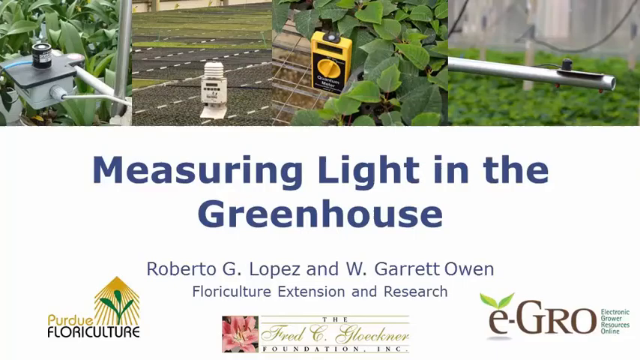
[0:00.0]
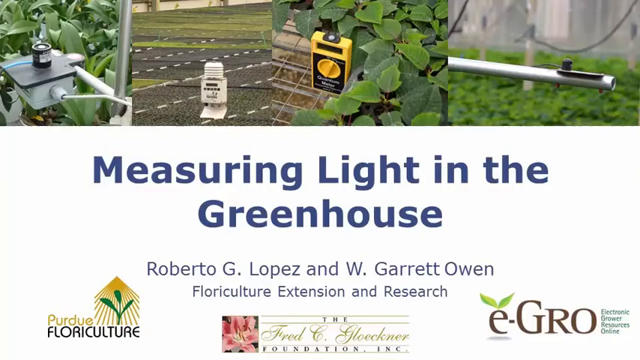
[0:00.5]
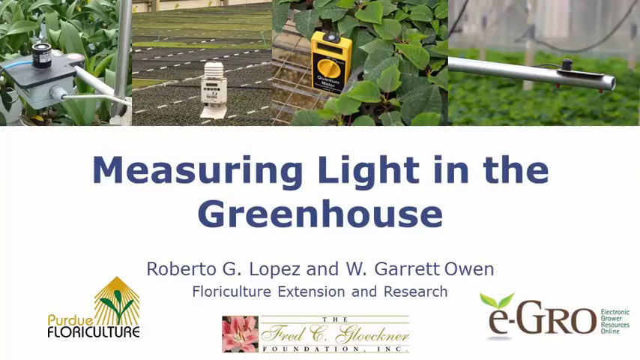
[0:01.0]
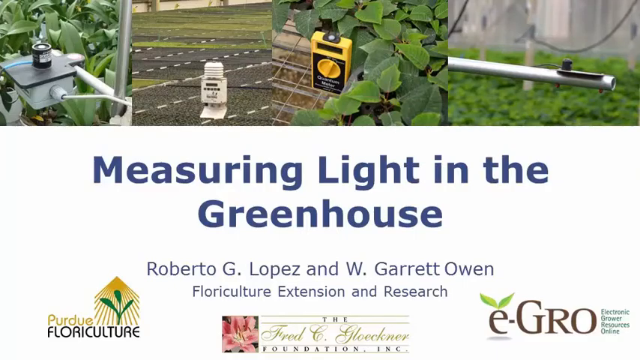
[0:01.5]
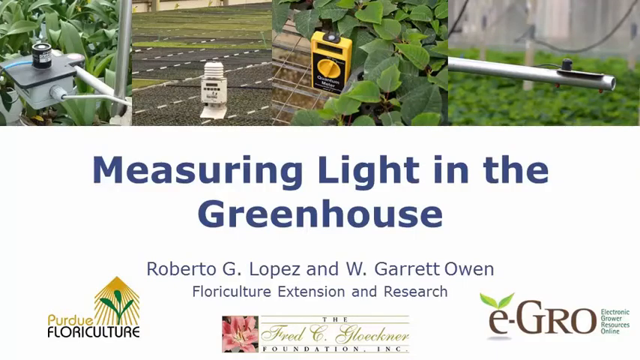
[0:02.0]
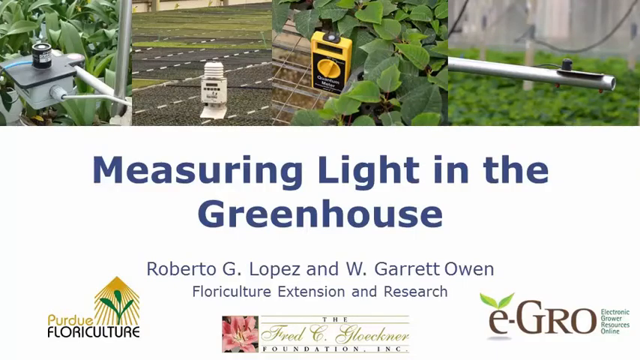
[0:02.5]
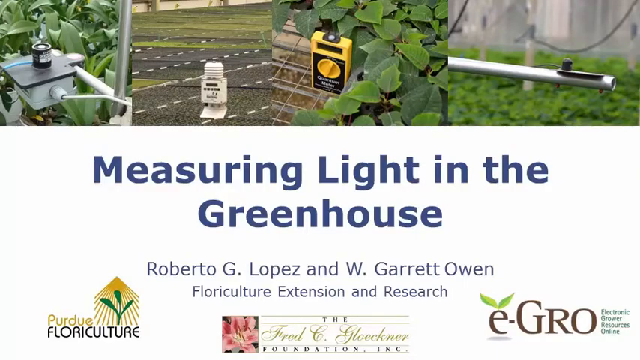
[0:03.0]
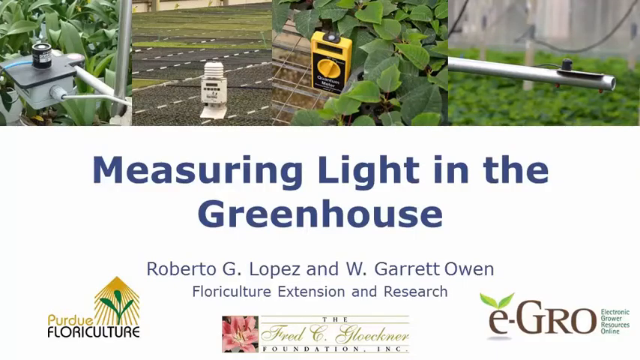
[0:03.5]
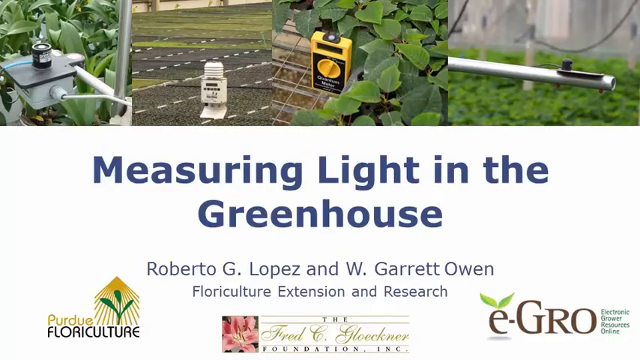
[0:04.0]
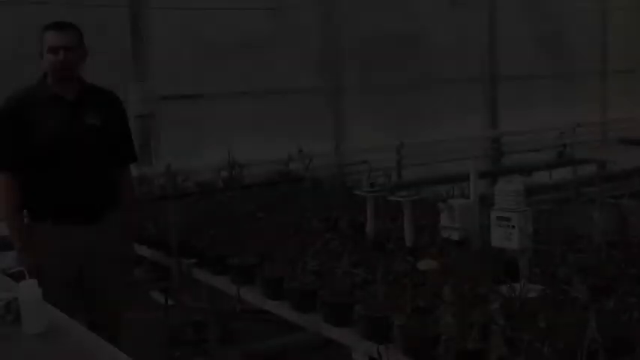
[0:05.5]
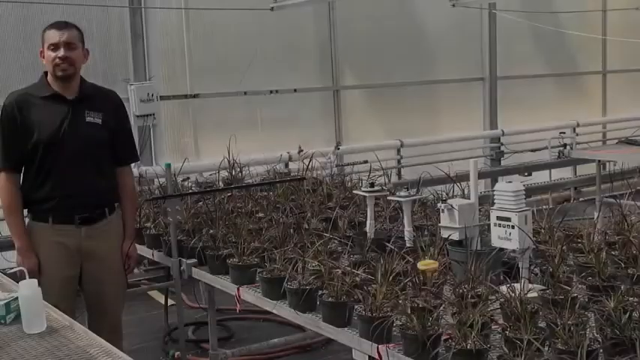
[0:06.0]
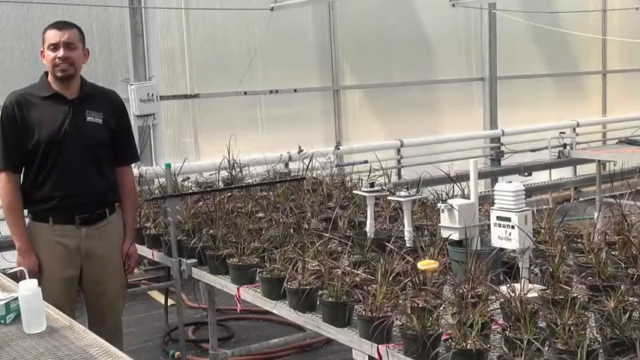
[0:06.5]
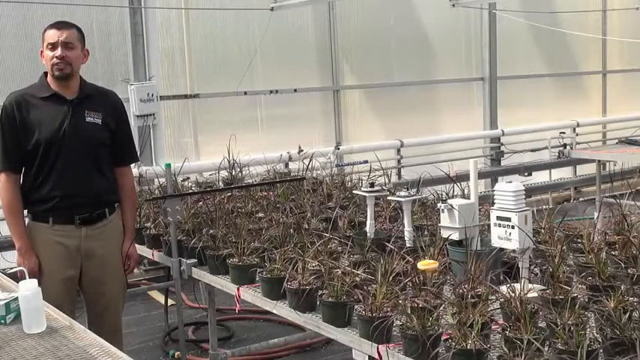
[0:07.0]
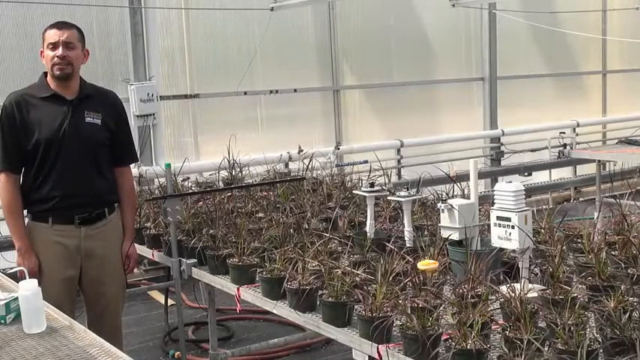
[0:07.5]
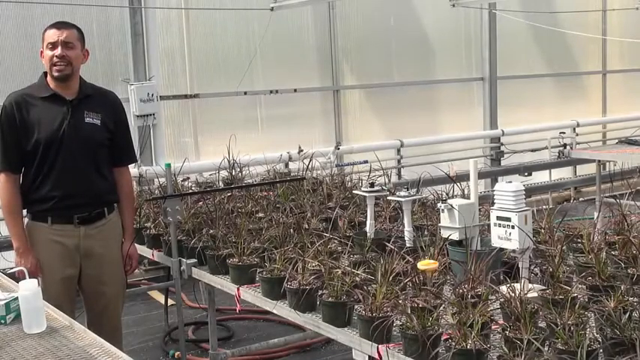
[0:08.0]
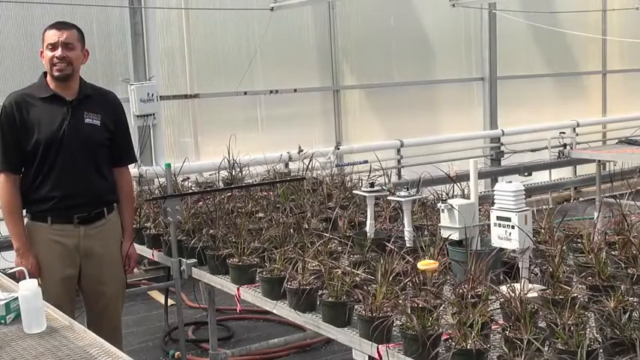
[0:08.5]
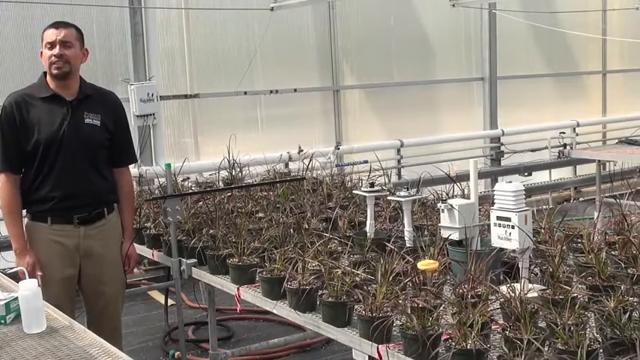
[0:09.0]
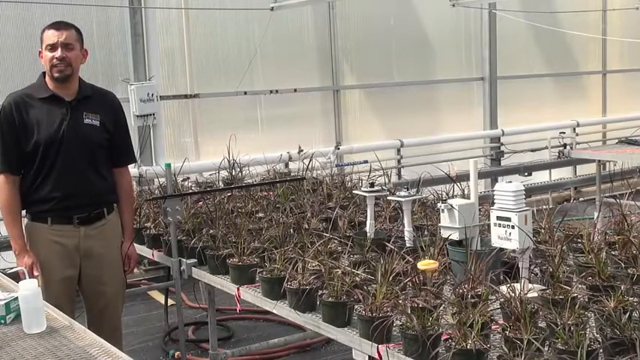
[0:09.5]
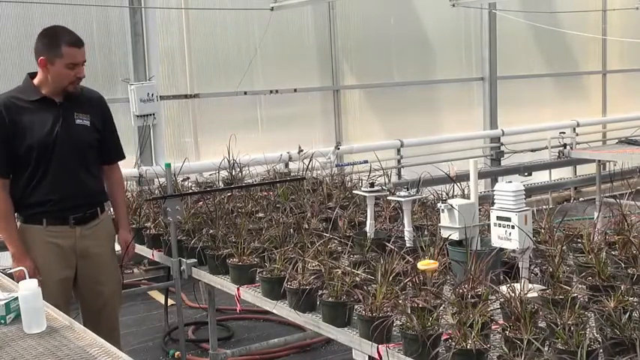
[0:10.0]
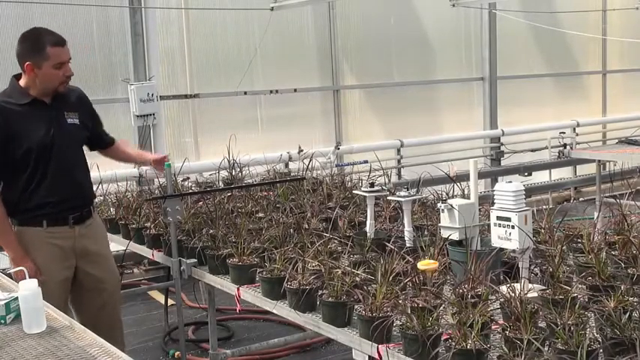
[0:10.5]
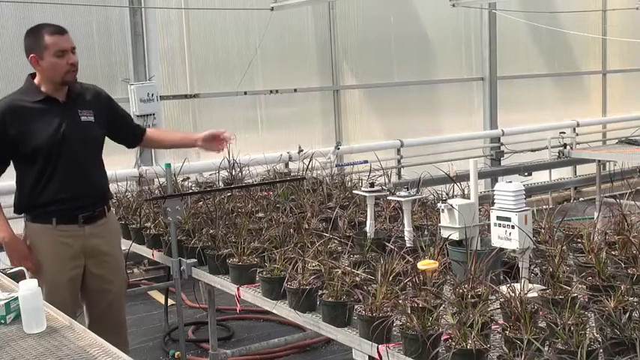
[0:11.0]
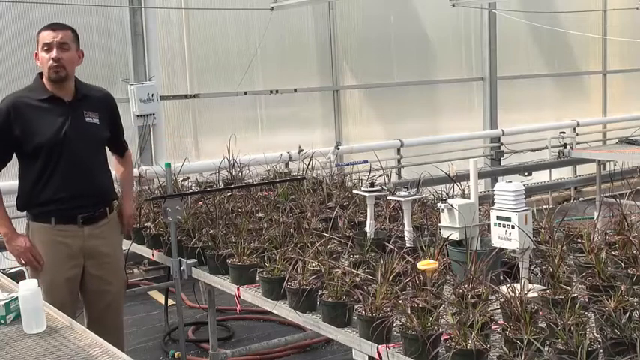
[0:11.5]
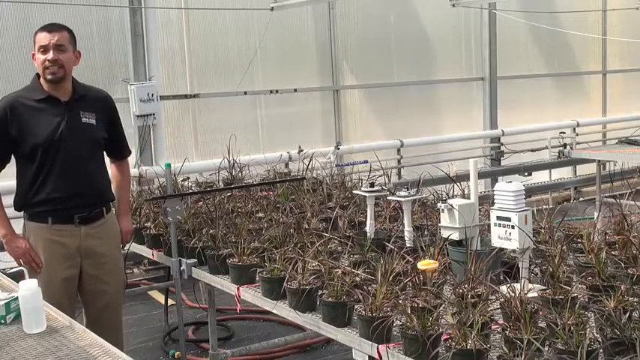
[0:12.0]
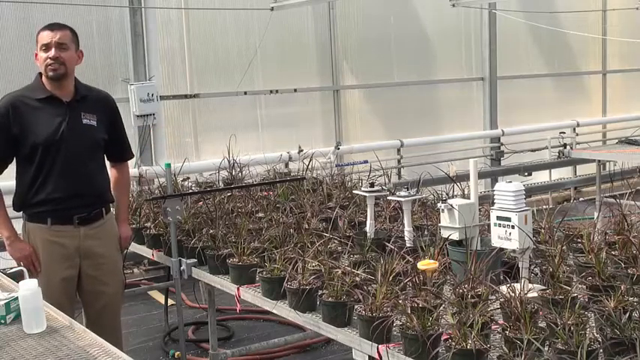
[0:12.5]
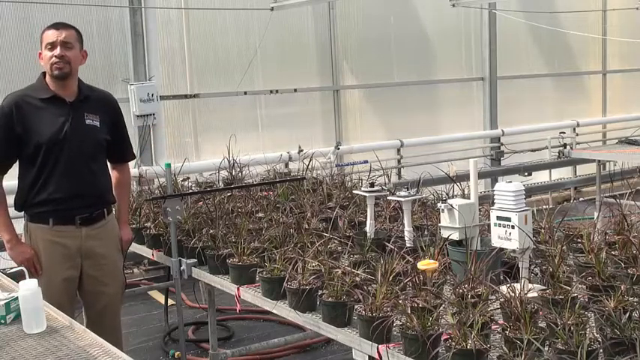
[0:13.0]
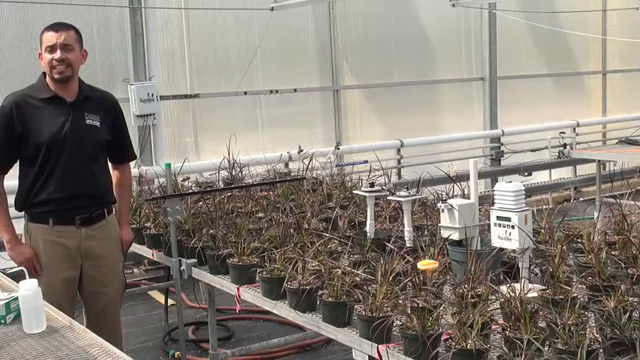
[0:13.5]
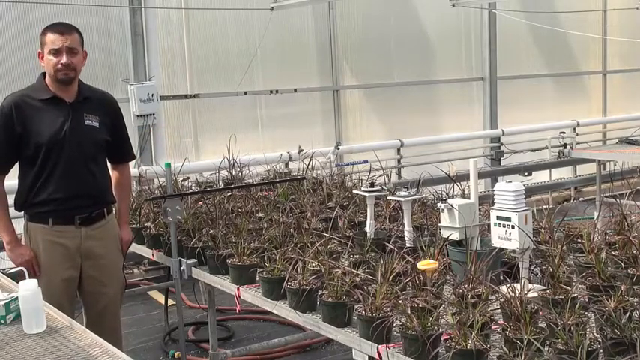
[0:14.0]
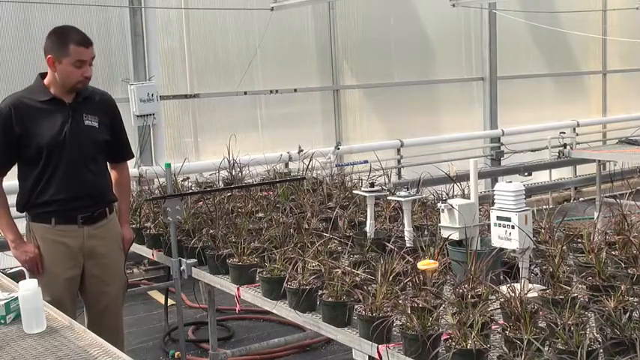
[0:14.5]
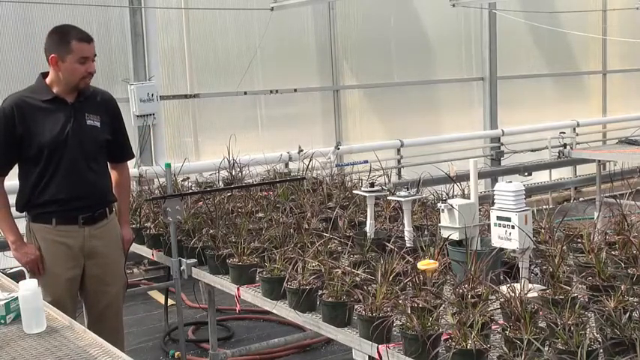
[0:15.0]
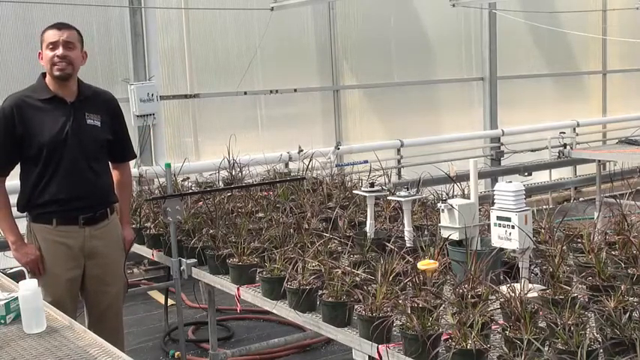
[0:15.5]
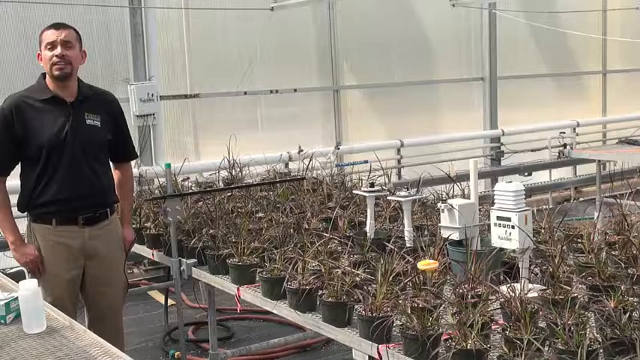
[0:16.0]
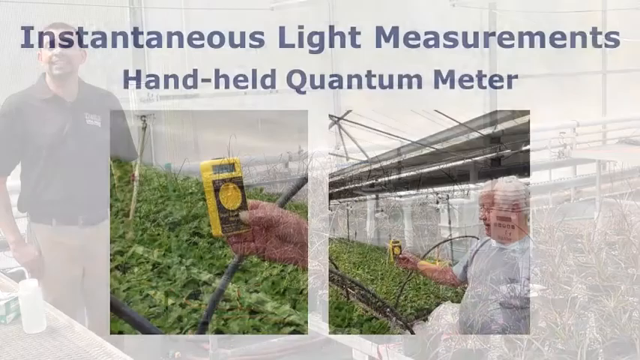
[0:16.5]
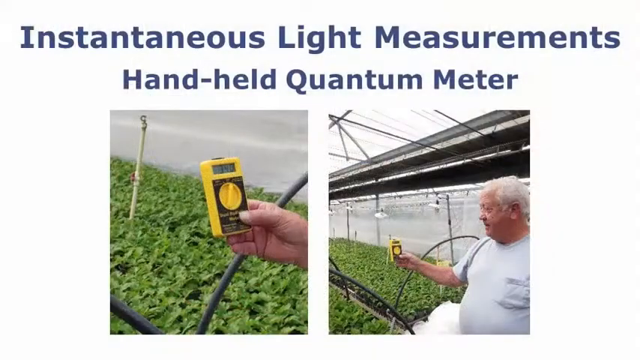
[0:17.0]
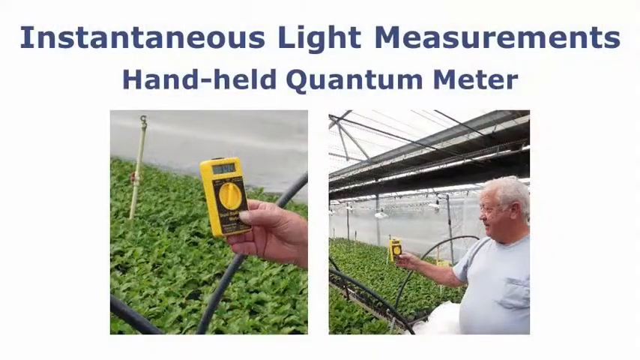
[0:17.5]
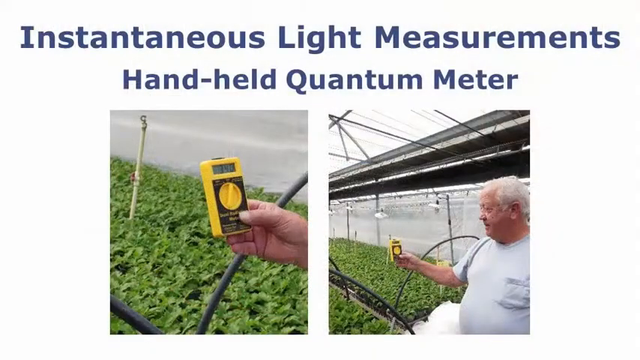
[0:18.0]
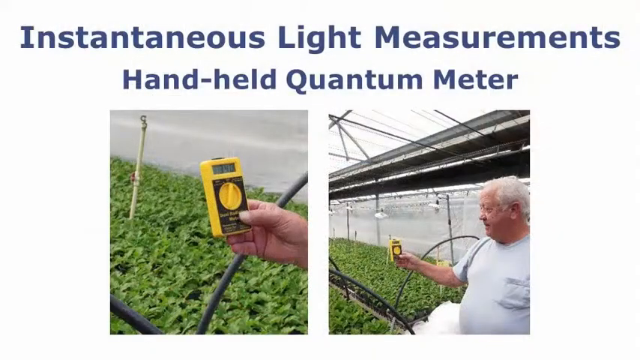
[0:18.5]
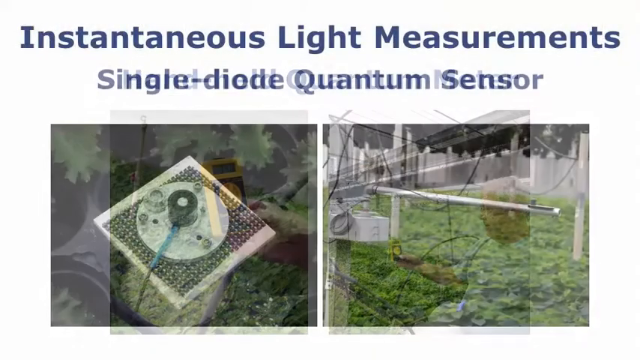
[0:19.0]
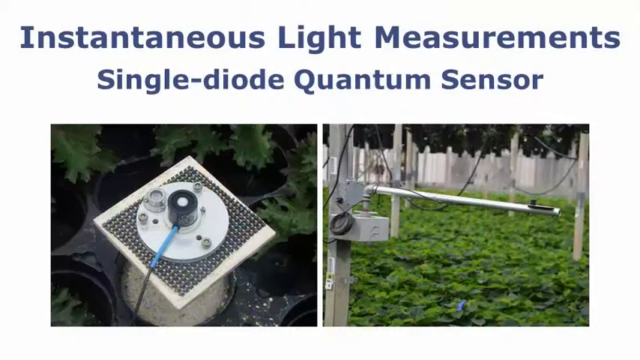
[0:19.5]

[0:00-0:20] Images appear across the top part of the screen: plant life with leaves and some sort of metal appliance, a rectangular box with a yellow knob on it, the rest of it looking black. Underneath, in blue font, the text reads "measuring light in the greenhouse." The presenters are apparently listed as Roberto G. Lopez and W. Garrett Owen, along with "floriculture extension and research." A man is on the left side of the screen, wearing a short-sleeved black shirt, and he puts both thumbs in his pockets. Text then reads "instantaneous light measurements," "single-diode," and "quantum sensor." An image shows what looks like a square with a blue and black cord coming out of it, apparently the item the text refers to.